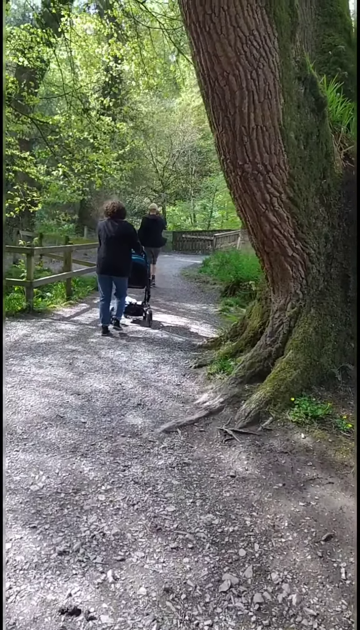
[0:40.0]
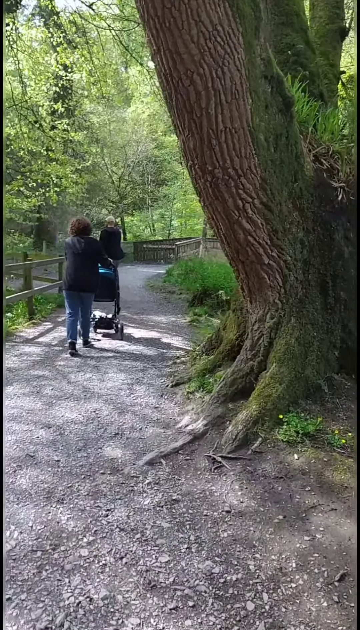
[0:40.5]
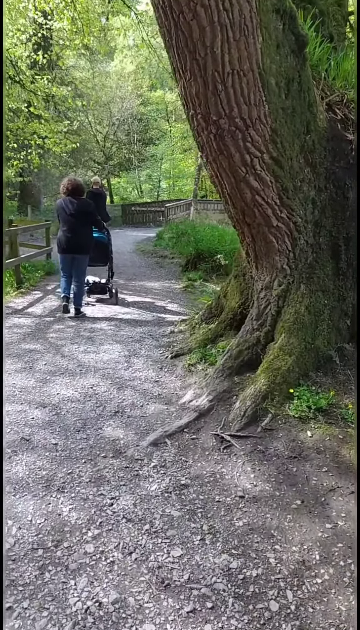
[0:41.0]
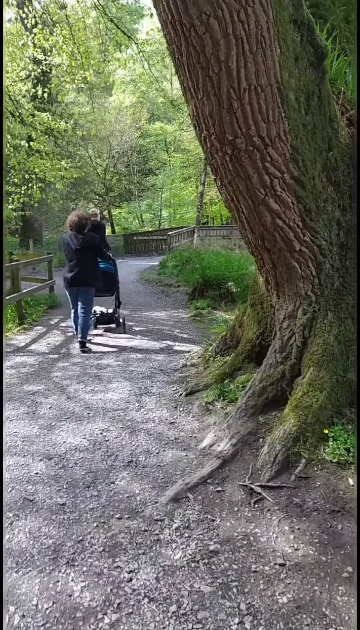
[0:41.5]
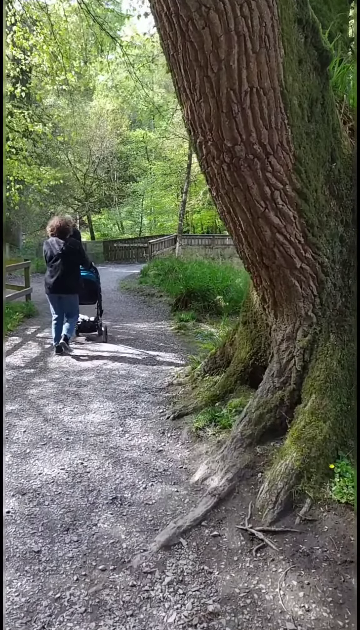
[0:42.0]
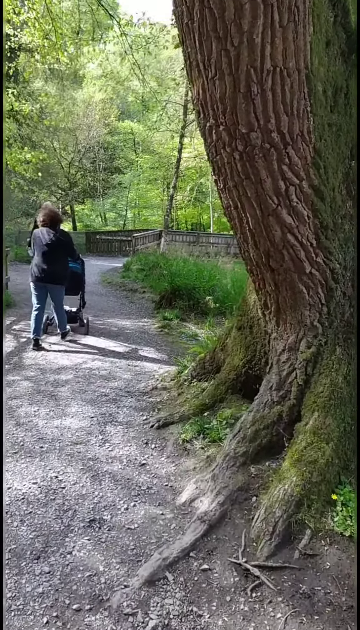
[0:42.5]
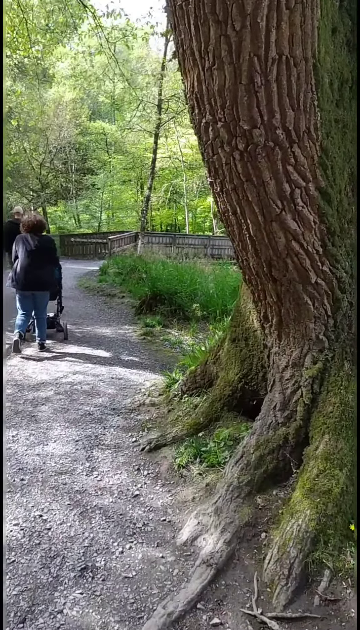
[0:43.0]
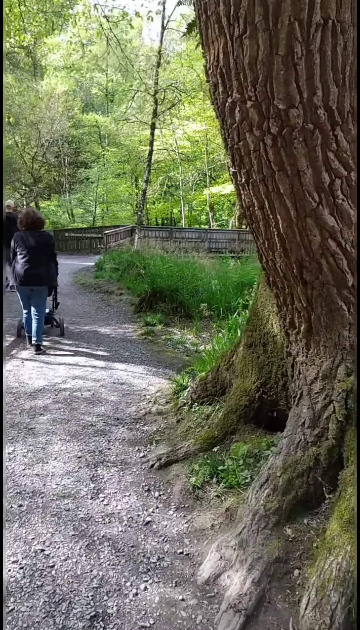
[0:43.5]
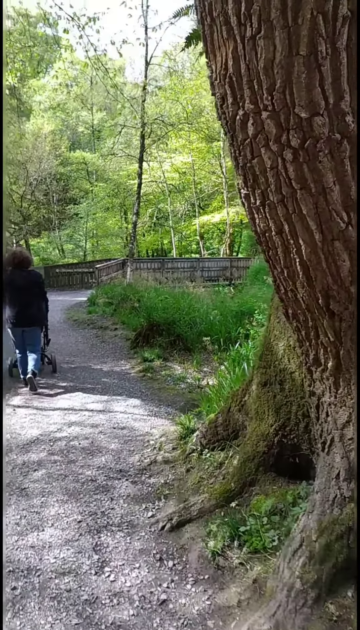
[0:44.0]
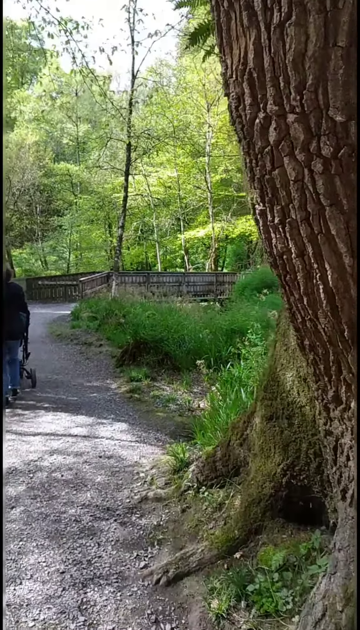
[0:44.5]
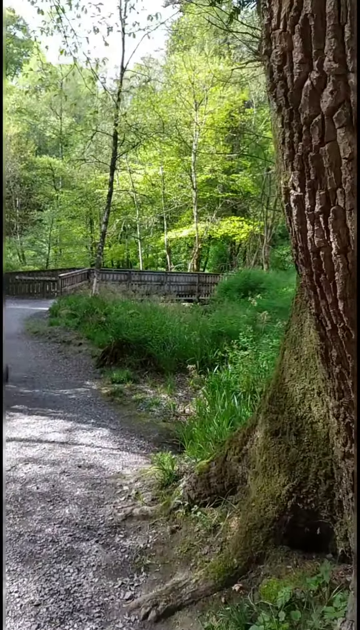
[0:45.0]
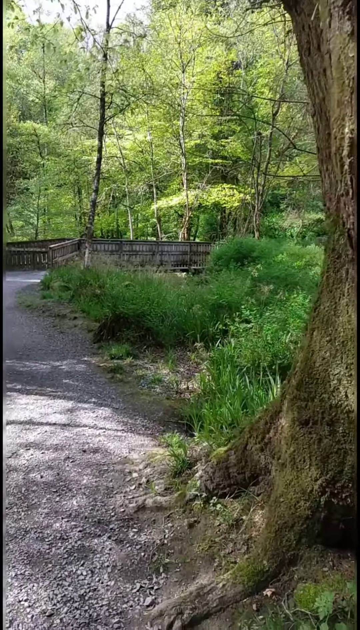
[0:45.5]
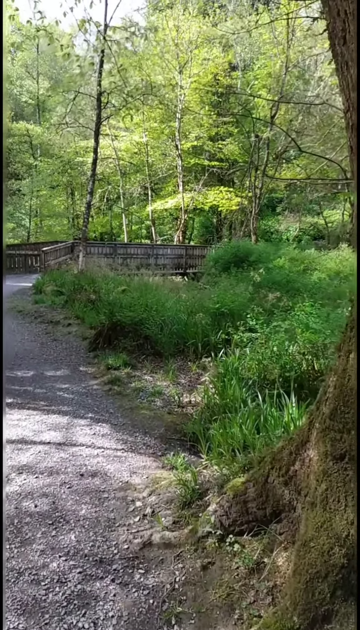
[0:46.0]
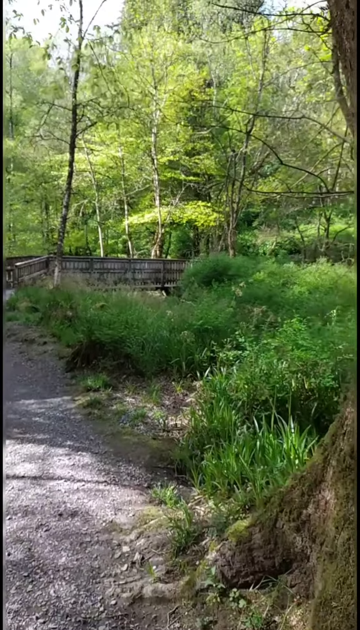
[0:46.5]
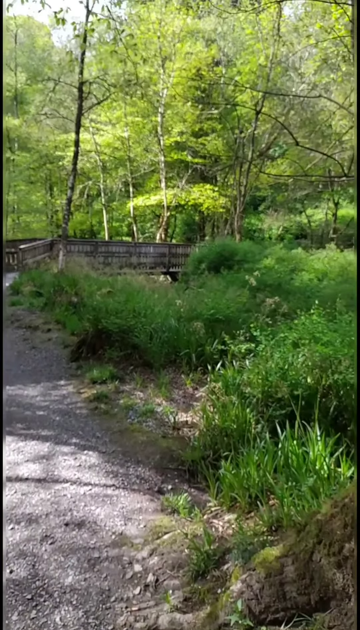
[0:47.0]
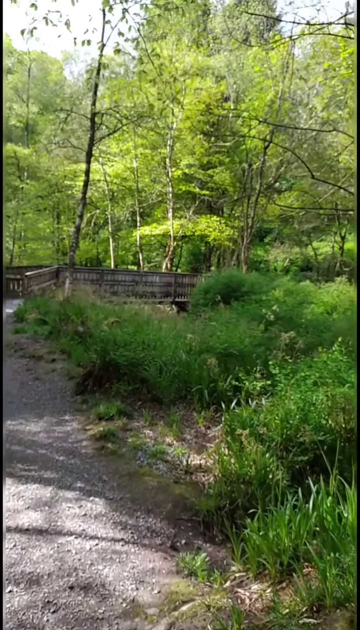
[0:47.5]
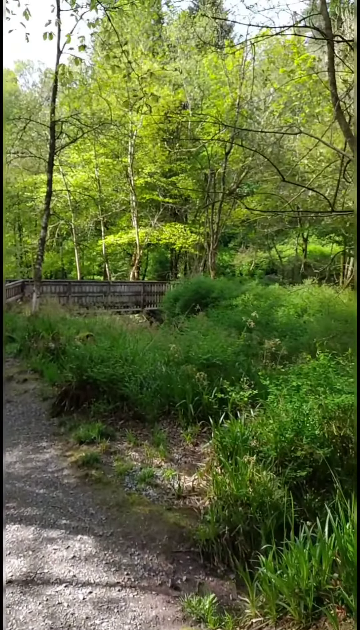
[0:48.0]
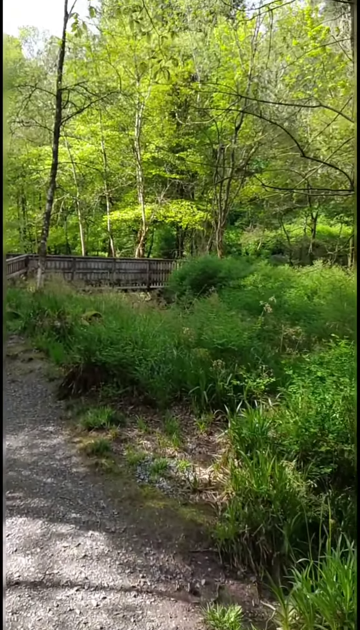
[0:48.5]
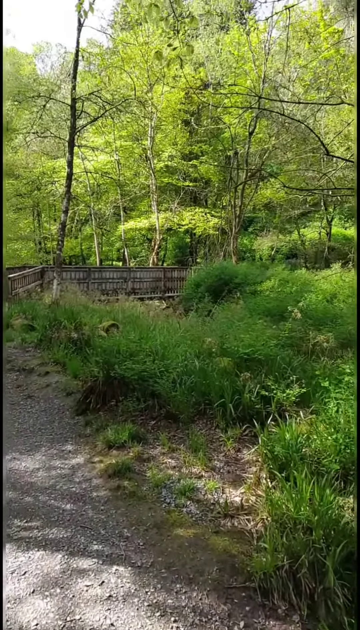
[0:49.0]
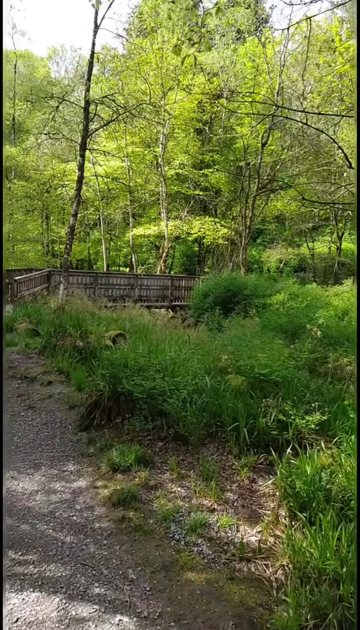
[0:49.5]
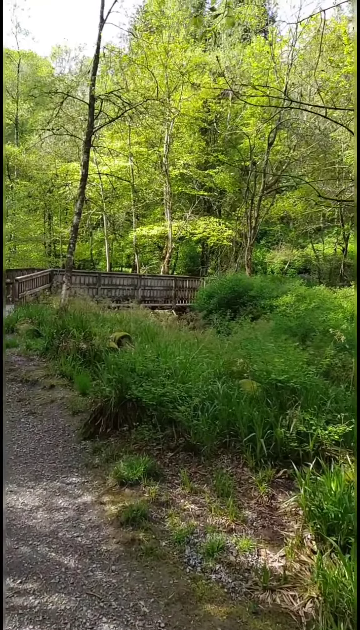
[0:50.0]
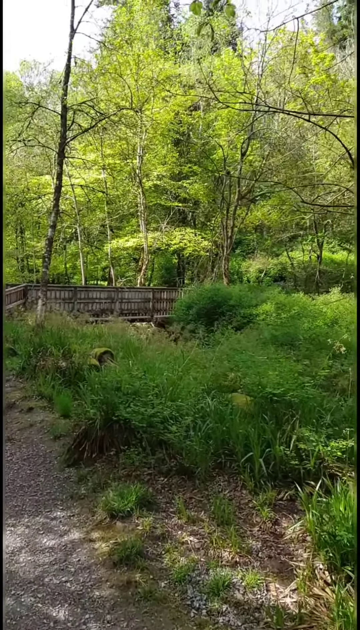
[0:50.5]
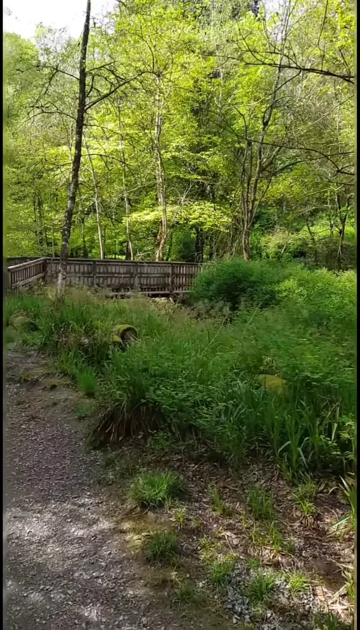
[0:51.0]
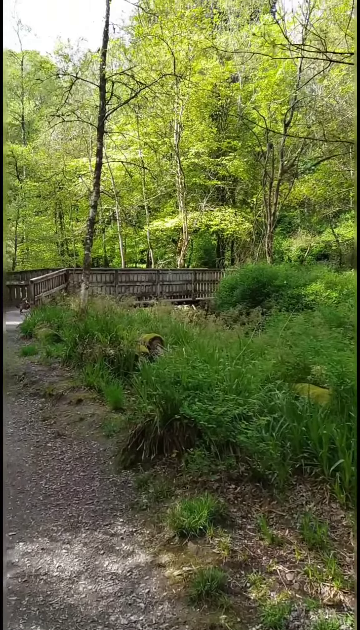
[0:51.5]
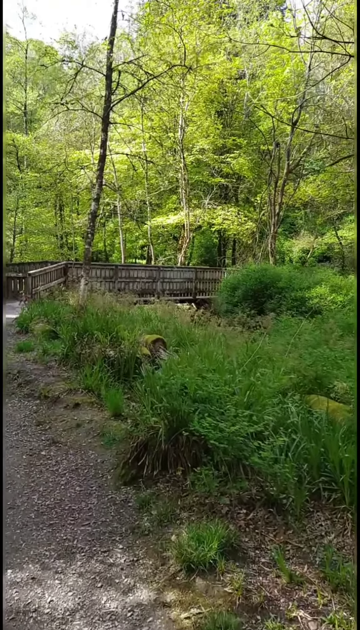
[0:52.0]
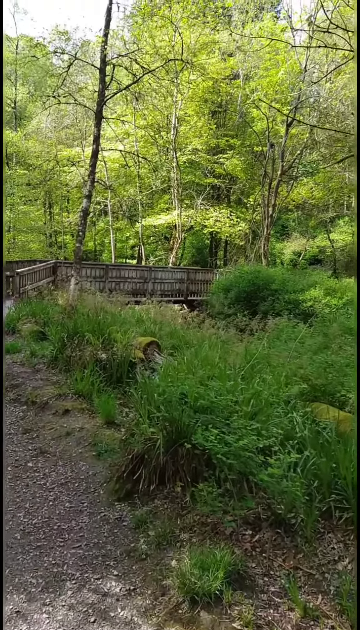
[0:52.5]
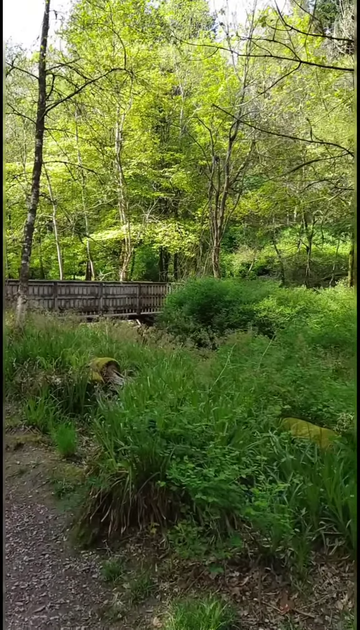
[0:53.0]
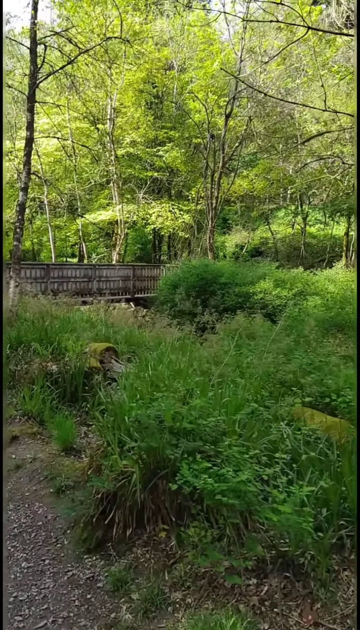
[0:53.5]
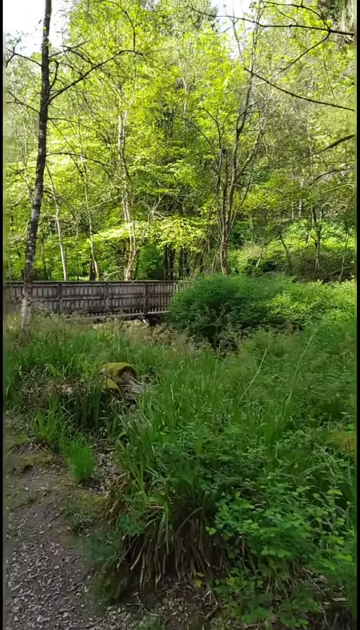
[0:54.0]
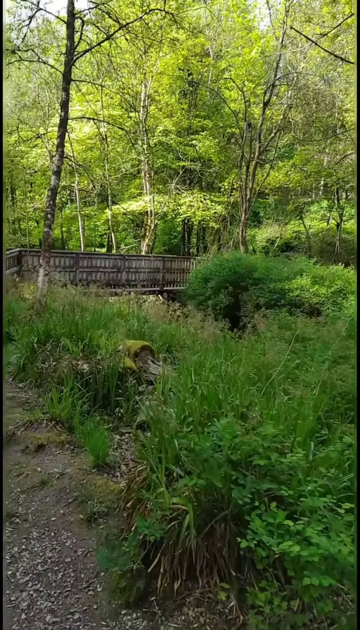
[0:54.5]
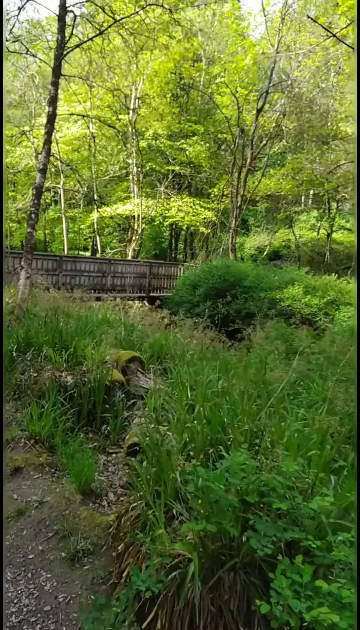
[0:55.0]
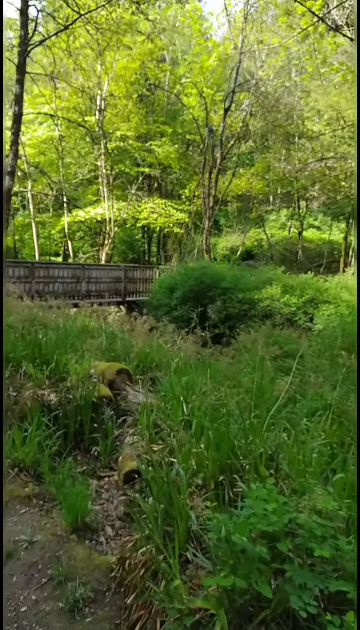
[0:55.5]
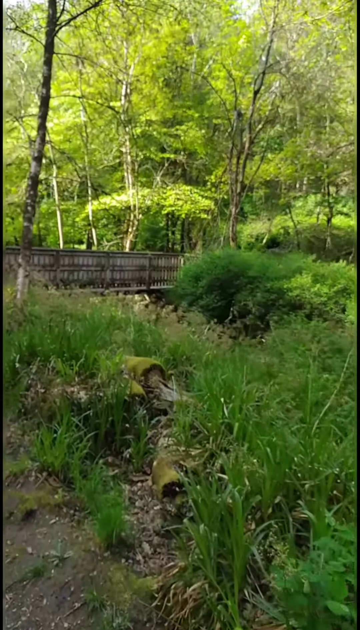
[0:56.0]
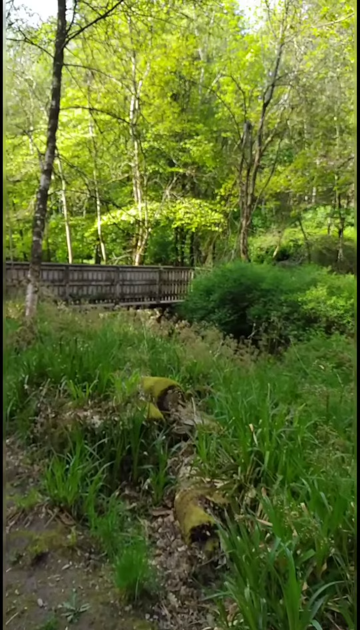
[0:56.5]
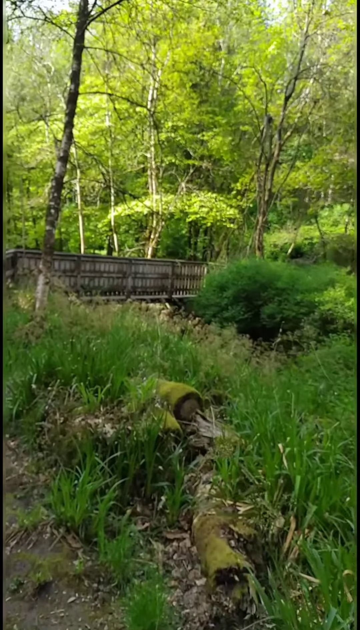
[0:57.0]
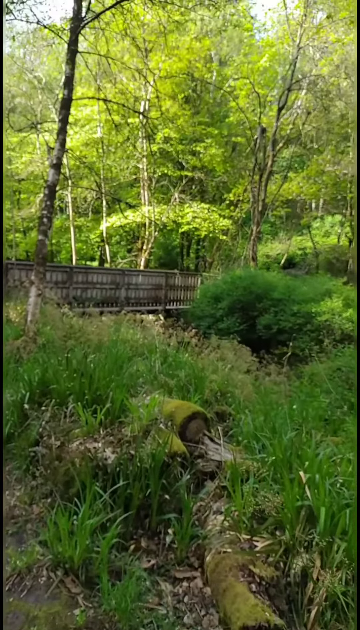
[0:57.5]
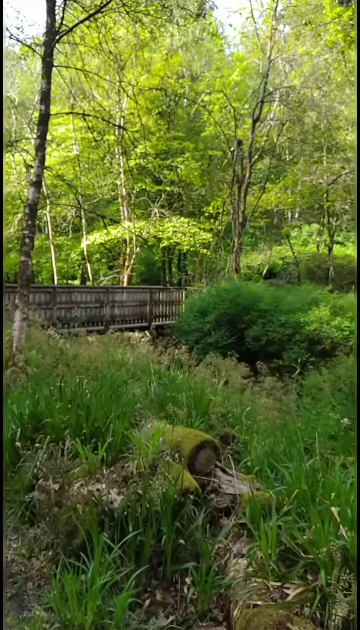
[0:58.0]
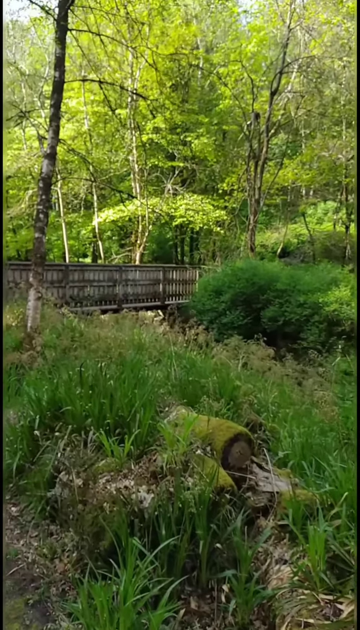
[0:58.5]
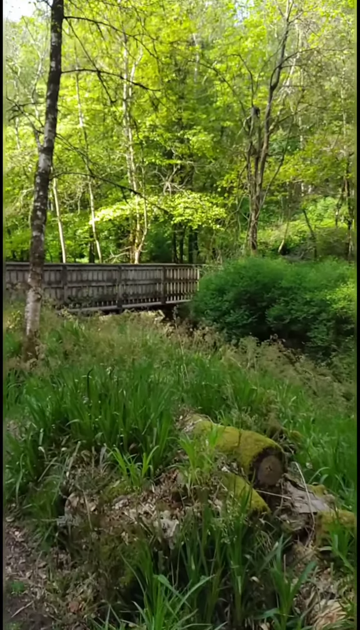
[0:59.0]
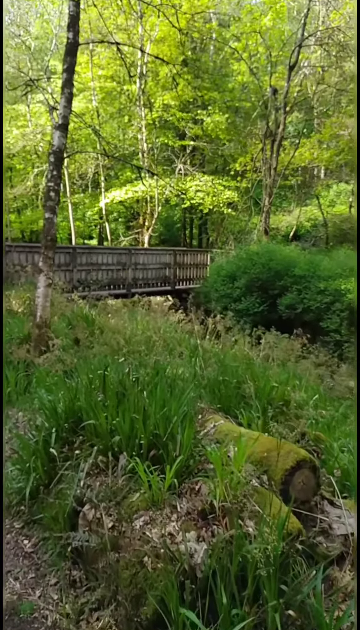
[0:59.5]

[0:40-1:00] The person walks past the large tree on the right and pans the camera to the right, and the people walking ahead of them disappear off frame. Past the tree, a bridge comes into view; it appears to be a wooden bridge with wood railing that rises up from the bank and then continues level, disappearing behind a dense bush as it reaches the other bank. Behind the bridge is a dense wooded area with trees reflecting the light from the sun above. The sky is visible above the trees and appears to be cloudy but bright. The camera bobs slightly as the person appears to approach the bridge, pointing the camera slightly to the right of the direction they are going. In the foreground, mossy logs are visible in the tall grass.